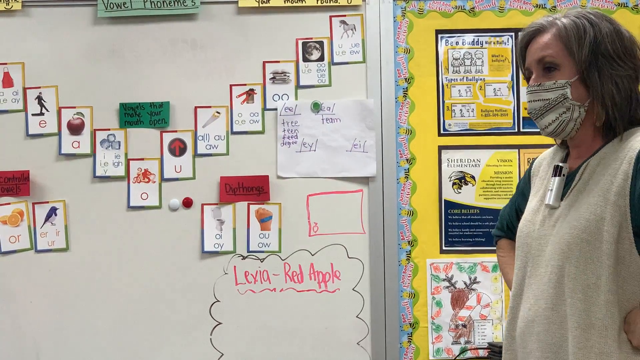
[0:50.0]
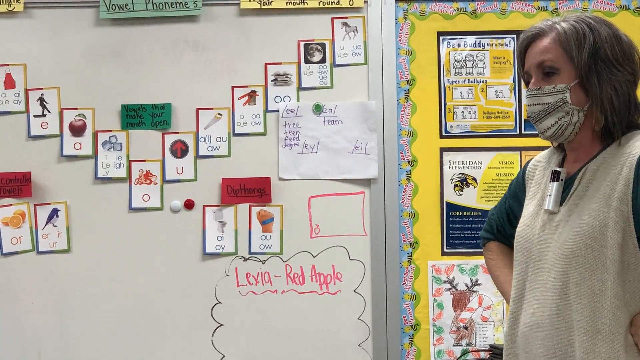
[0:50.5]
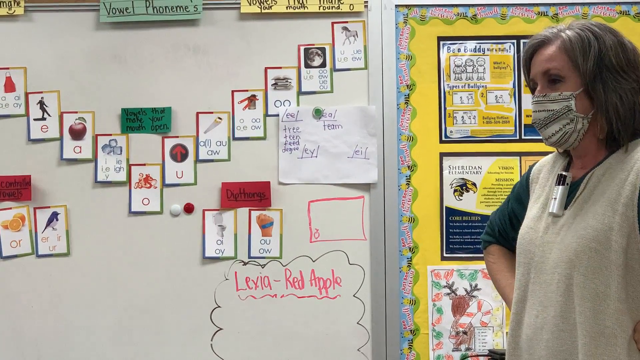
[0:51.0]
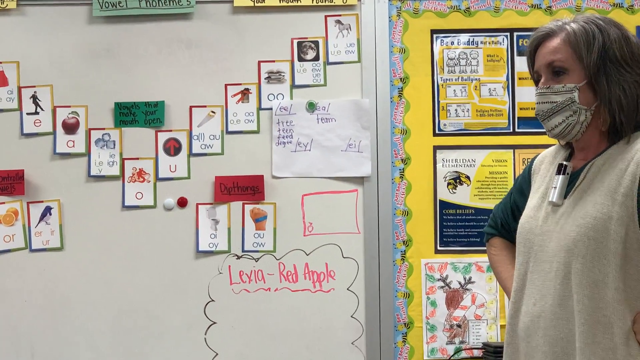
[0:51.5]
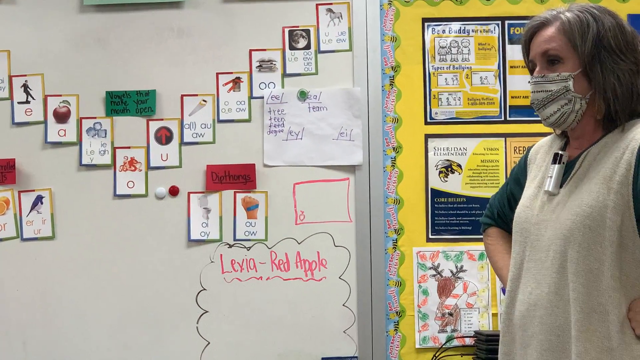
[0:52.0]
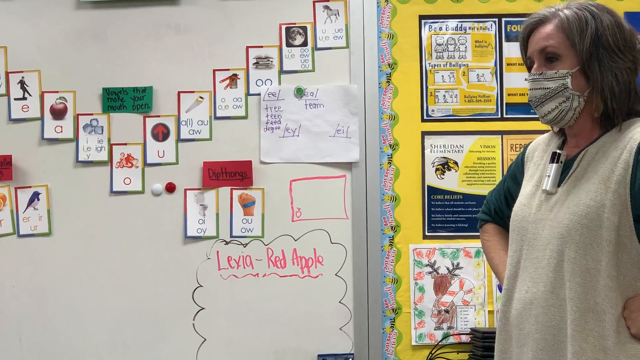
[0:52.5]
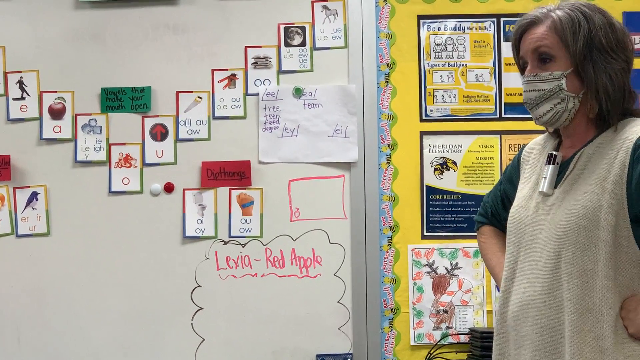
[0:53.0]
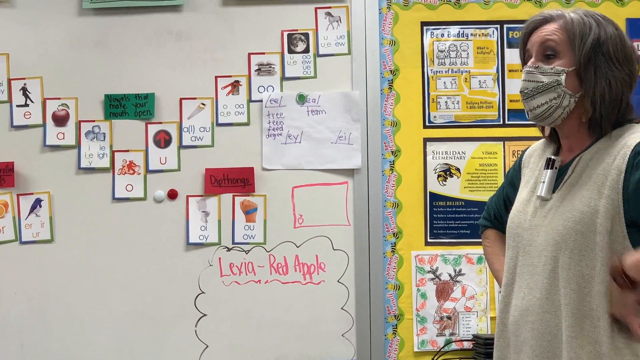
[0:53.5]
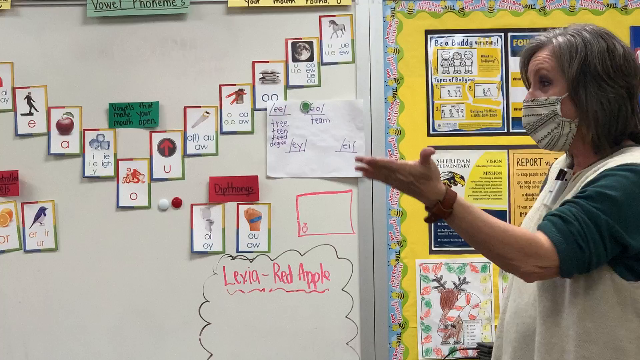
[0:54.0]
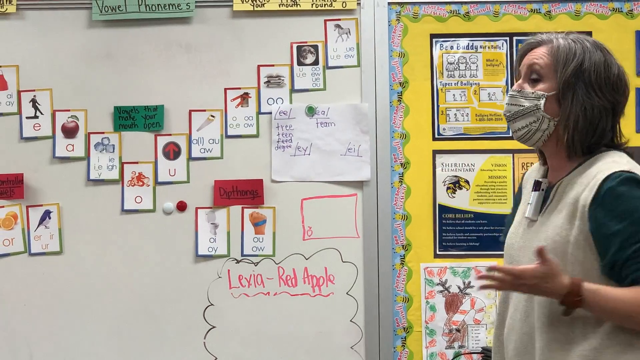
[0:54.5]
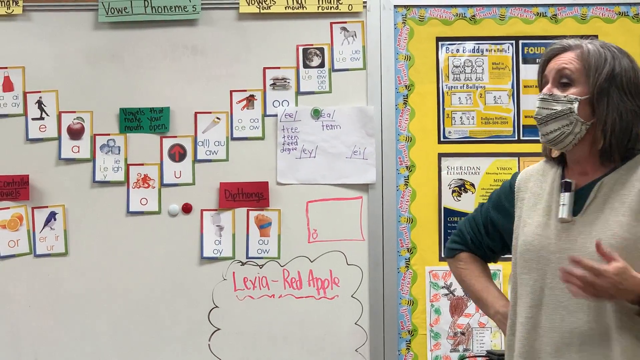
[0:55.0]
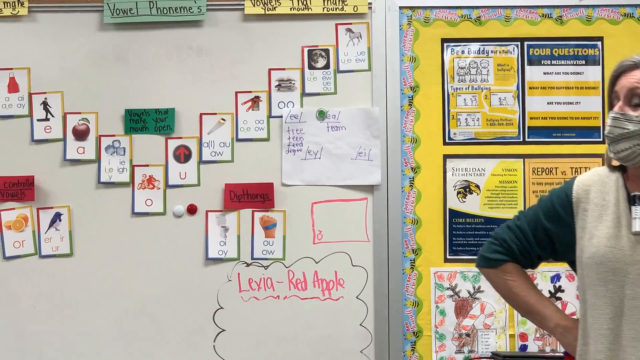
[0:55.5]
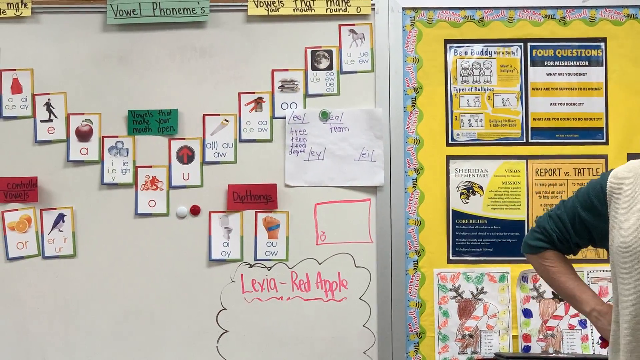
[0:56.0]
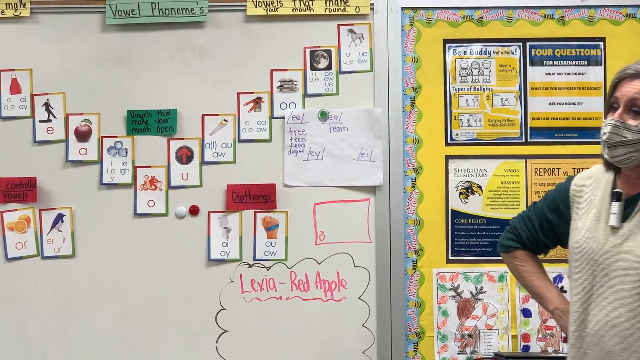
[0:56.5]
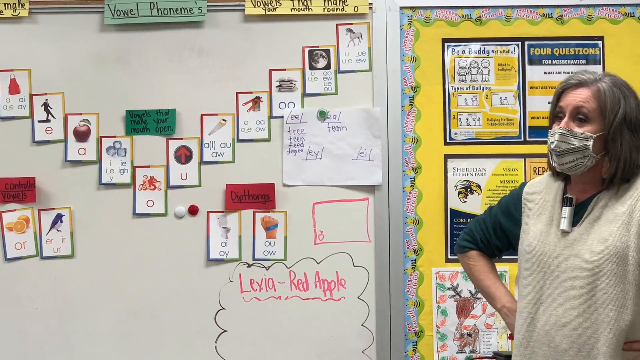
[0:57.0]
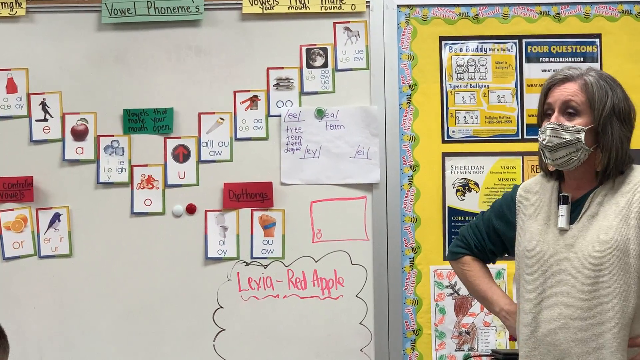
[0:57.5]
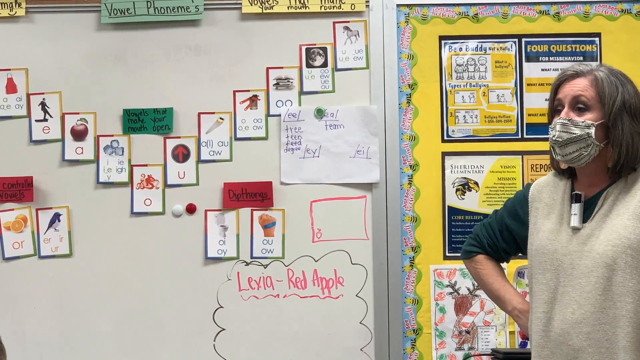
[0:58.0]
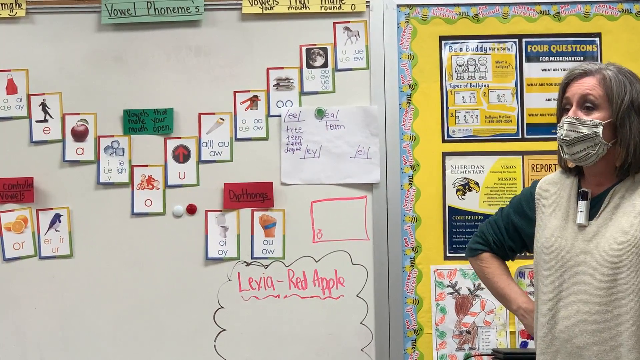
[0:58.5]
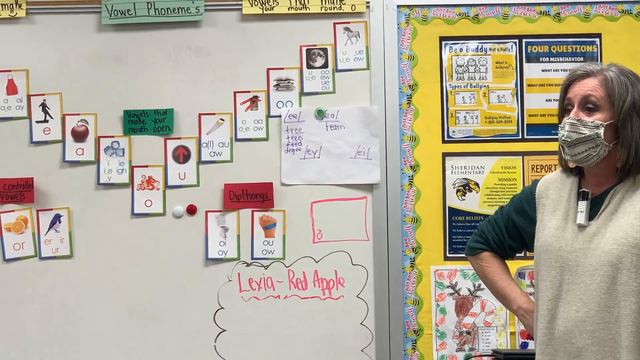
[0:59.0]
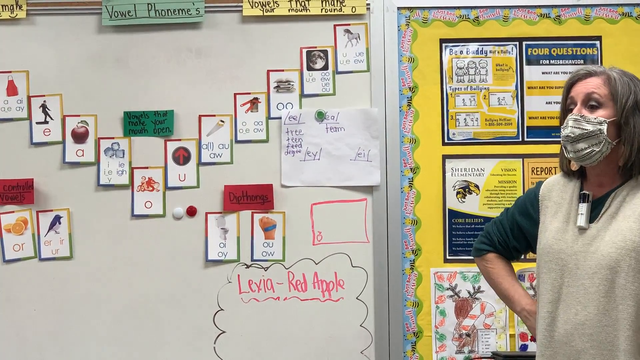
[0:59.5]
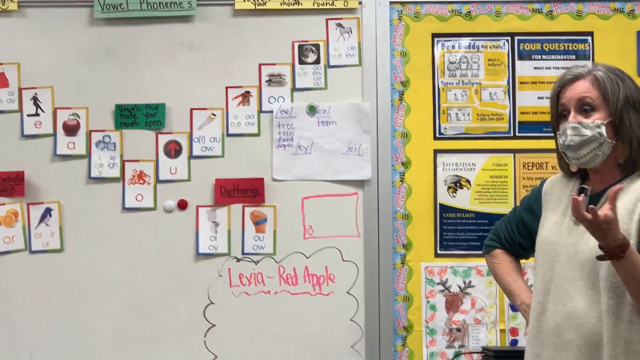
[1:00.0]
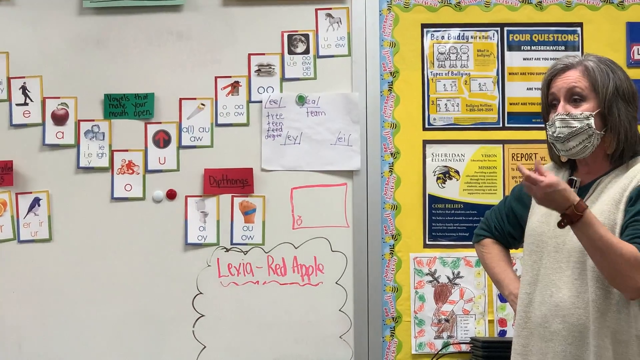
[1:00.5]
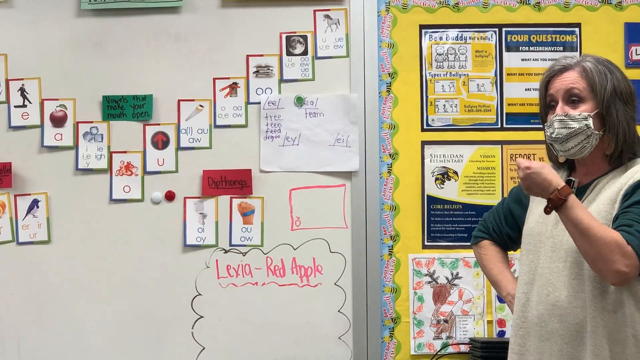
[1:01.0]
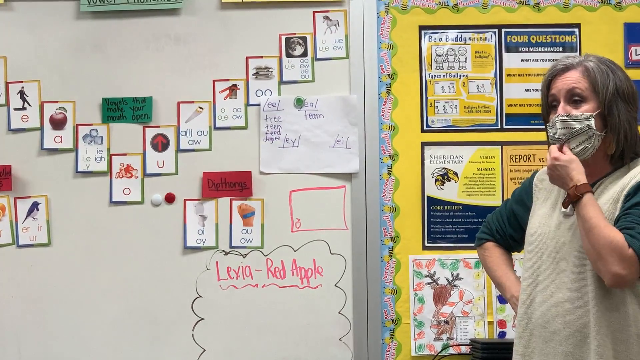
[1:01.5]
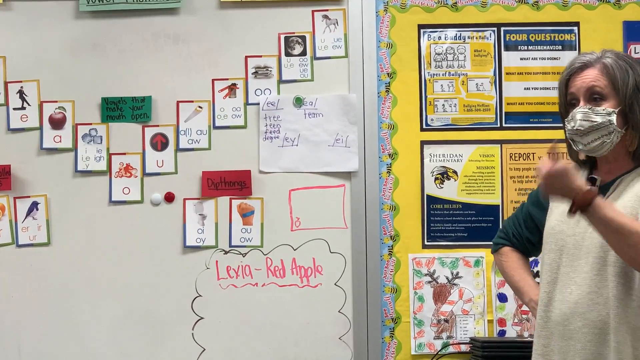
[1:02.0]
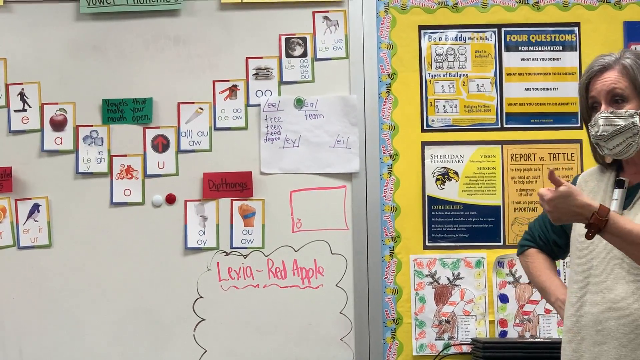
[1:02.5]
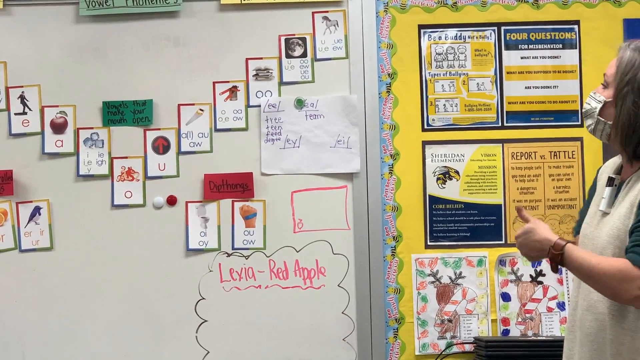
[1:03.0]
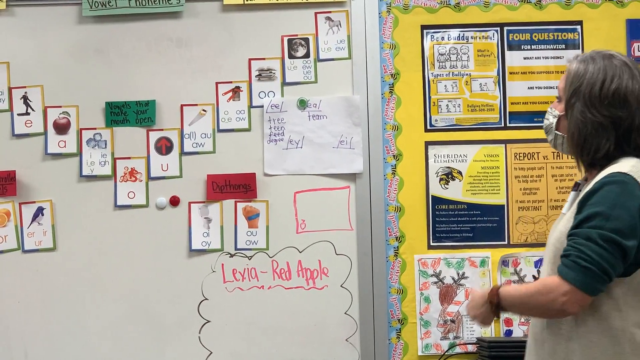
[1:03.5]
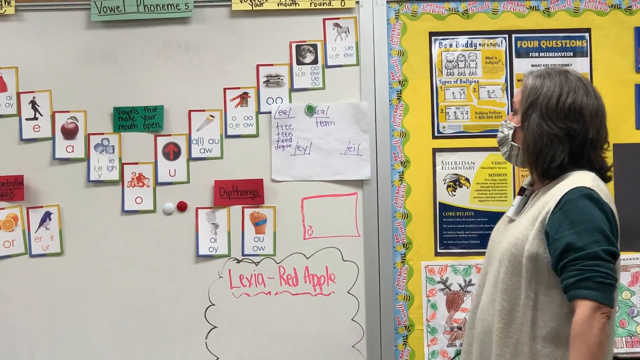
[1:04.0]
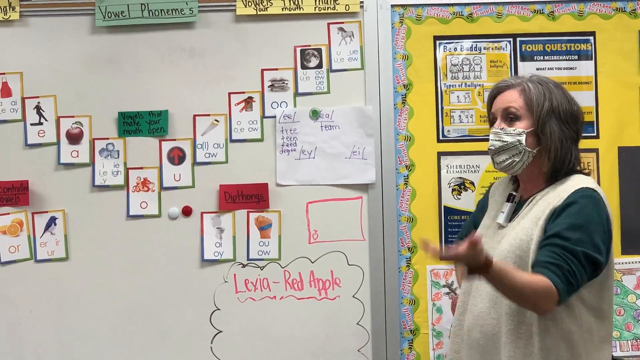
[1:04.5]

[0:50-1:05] The teacher initially listens to what someone else is saying. She stands at the front wearing a face mask, with greyish black hair, an off-white jumper with a green shirt underneath, and a microphone on her chest. Behind her is a whiteboard with several pieces of card and paper on it, which seem to show vowels and sounds associated with different words; the photos on it include an up arrow, an arrow, a dress and a horse. Underneath are the words "Levia Red Apple", so this could be a language lesson where pupils learn the sounds of a different language. On the right is a yellow poster board containing many different posters and some drawings. The teacher explains but also listens to what the class has to say.